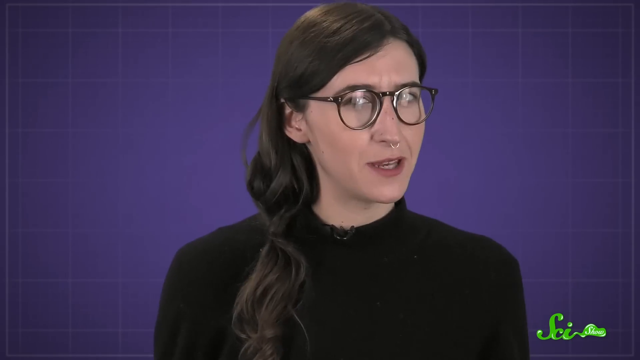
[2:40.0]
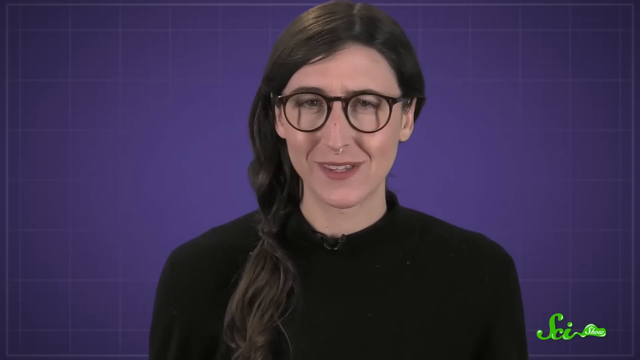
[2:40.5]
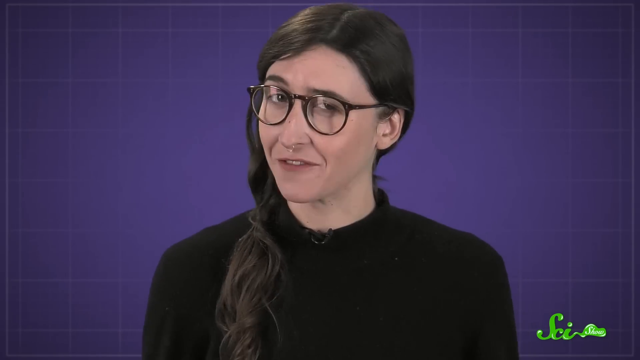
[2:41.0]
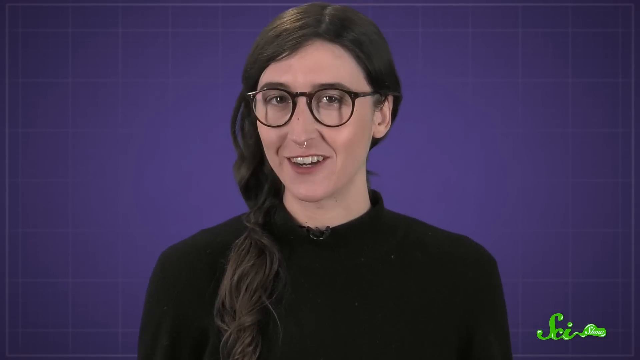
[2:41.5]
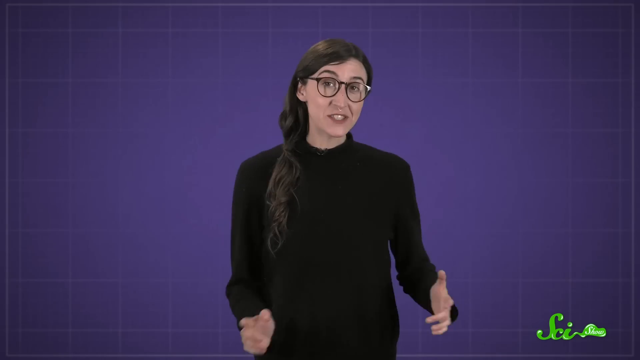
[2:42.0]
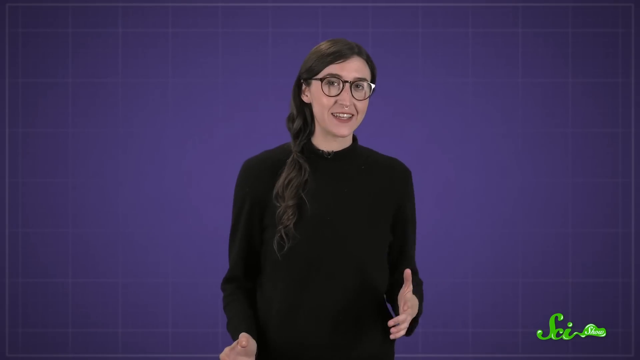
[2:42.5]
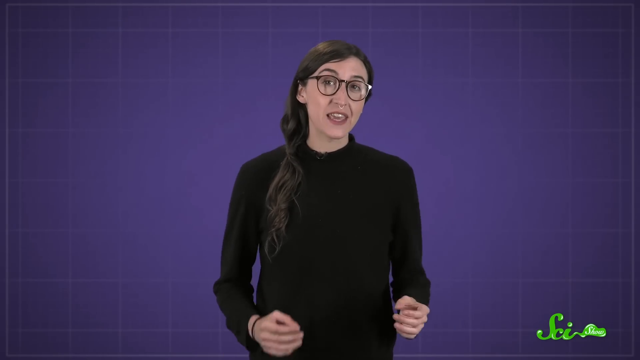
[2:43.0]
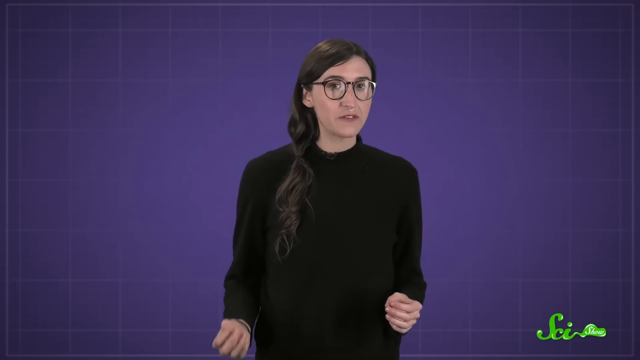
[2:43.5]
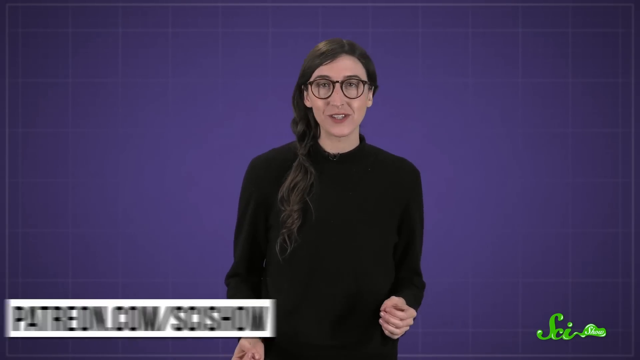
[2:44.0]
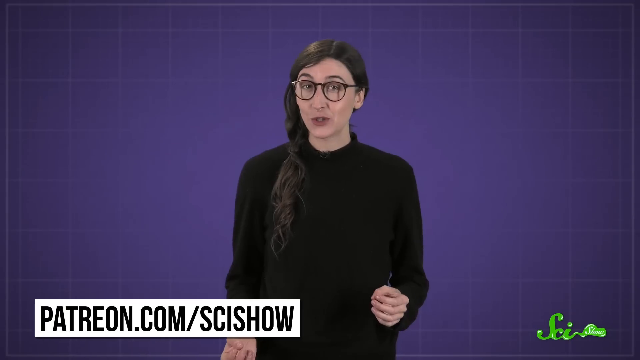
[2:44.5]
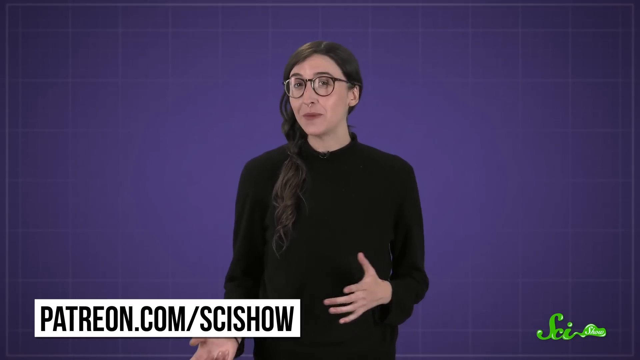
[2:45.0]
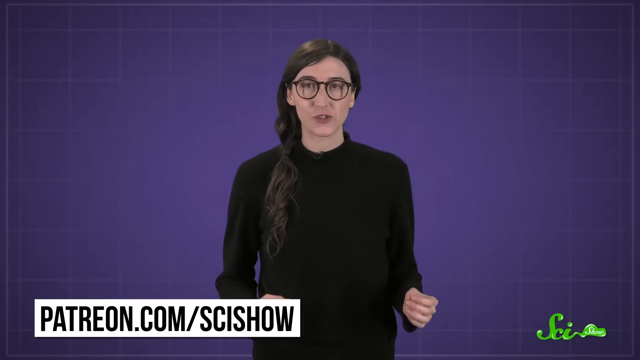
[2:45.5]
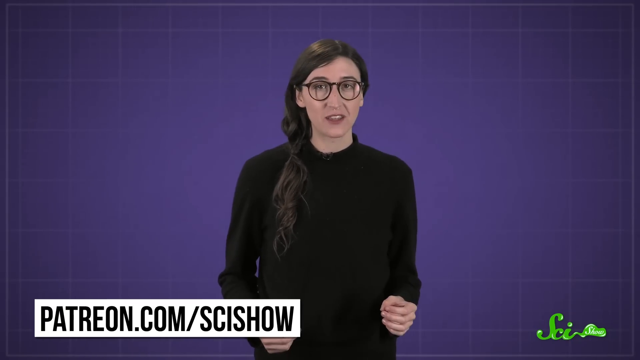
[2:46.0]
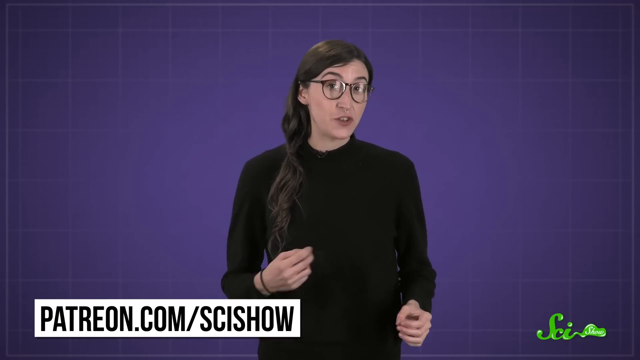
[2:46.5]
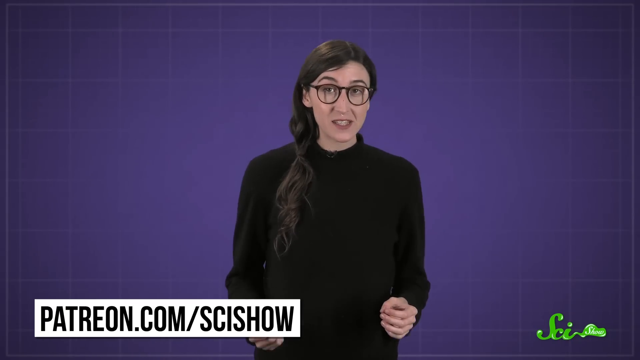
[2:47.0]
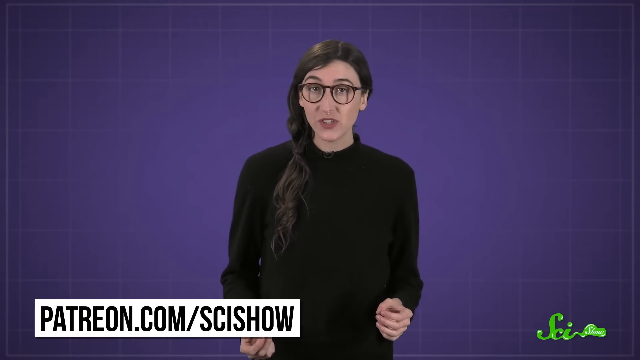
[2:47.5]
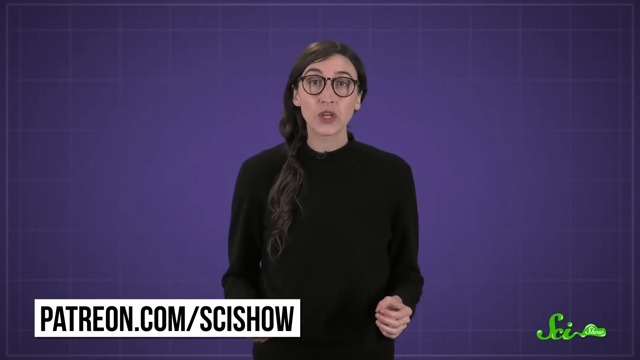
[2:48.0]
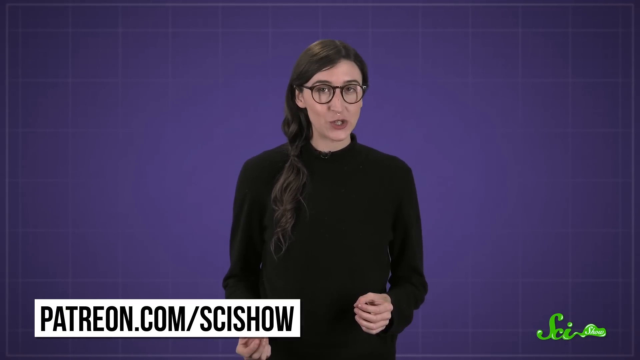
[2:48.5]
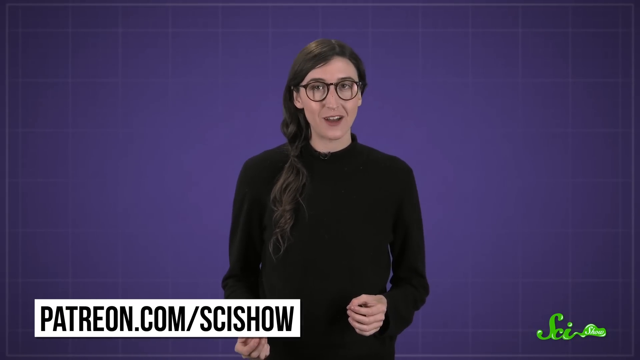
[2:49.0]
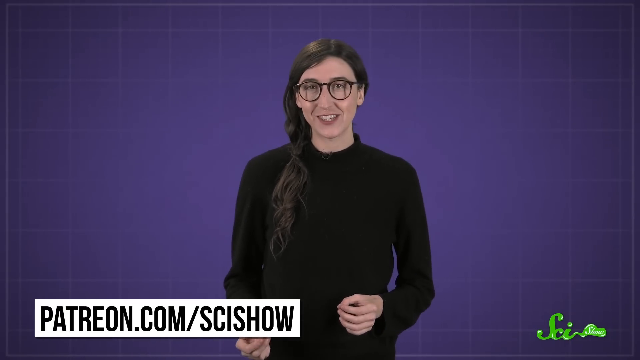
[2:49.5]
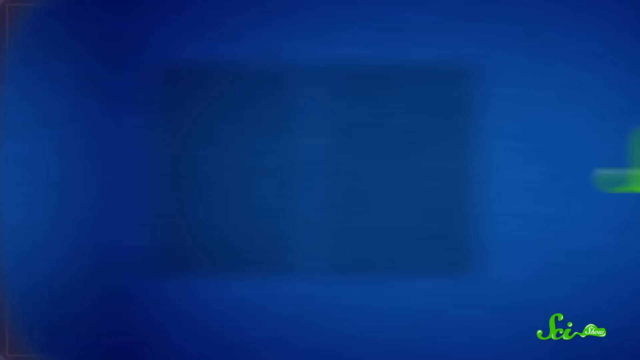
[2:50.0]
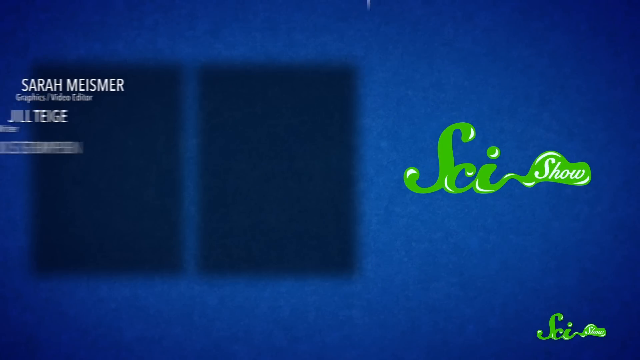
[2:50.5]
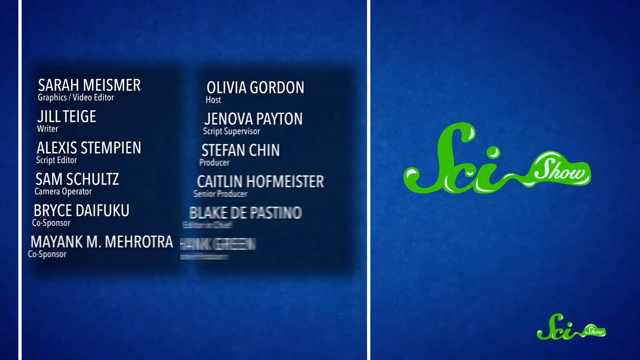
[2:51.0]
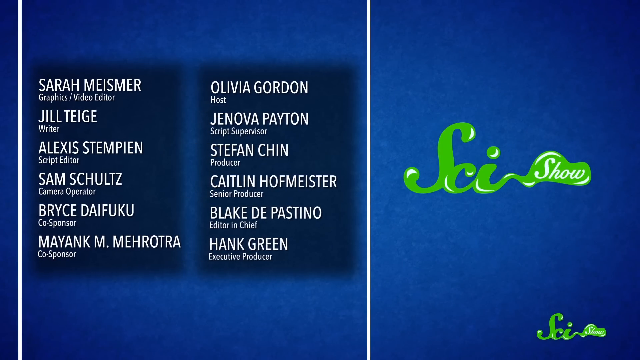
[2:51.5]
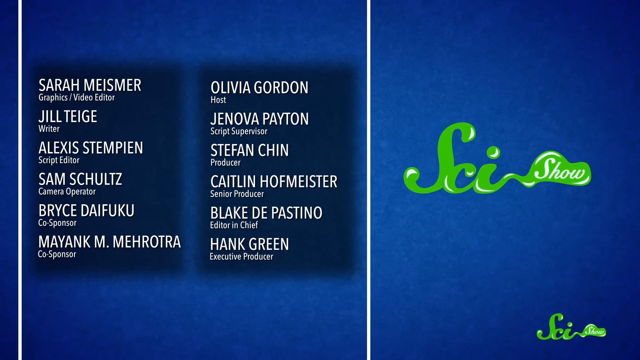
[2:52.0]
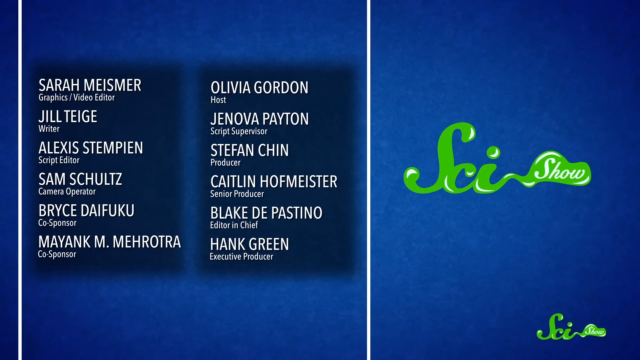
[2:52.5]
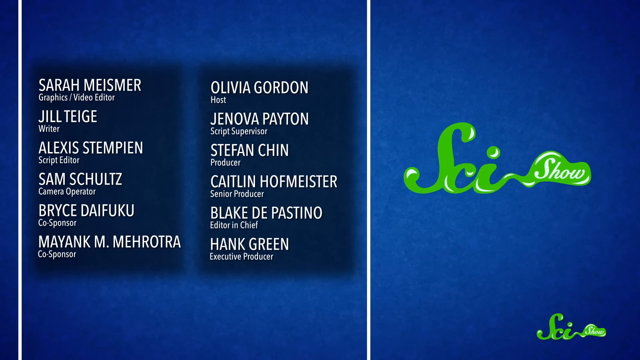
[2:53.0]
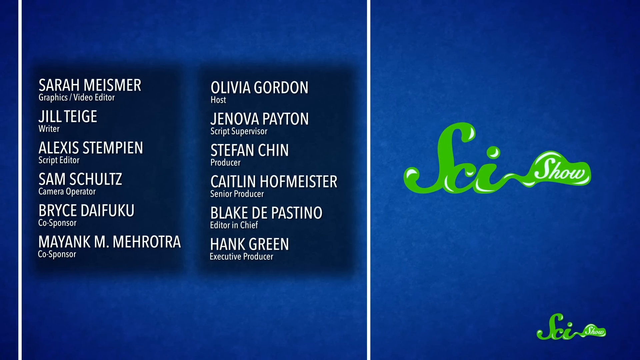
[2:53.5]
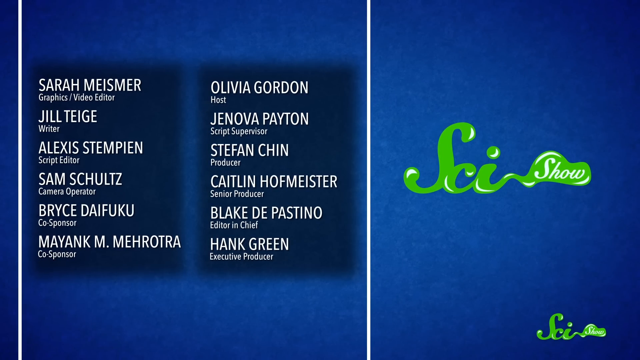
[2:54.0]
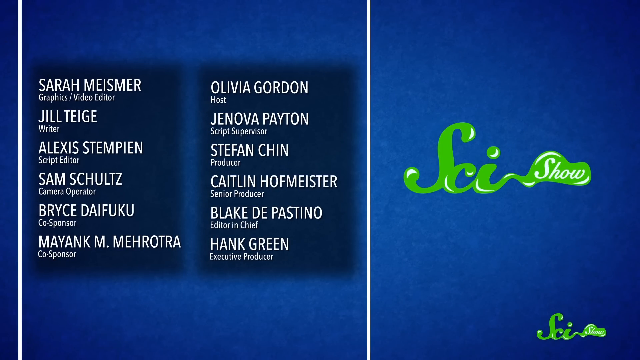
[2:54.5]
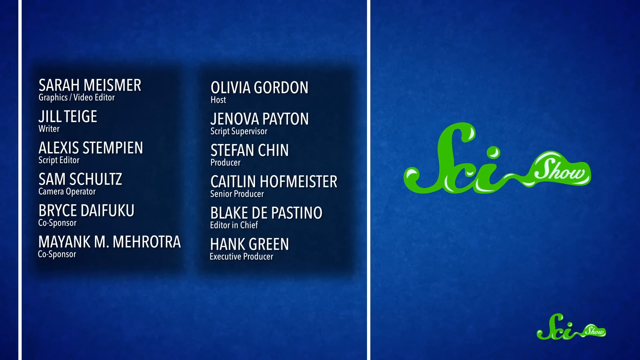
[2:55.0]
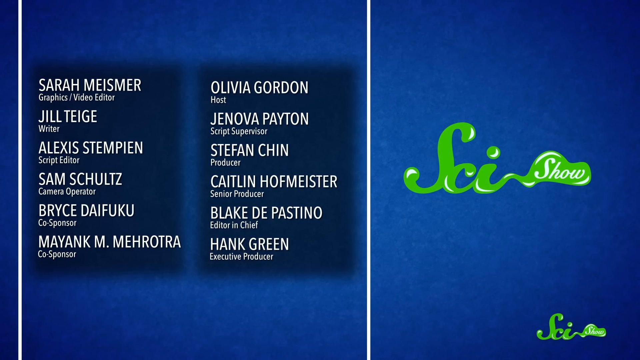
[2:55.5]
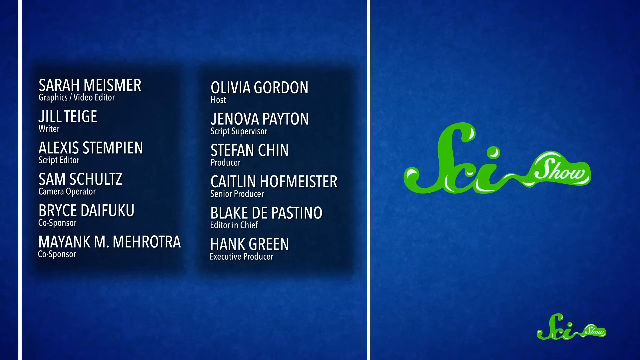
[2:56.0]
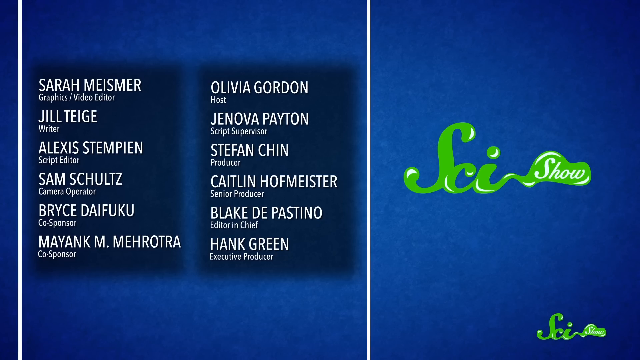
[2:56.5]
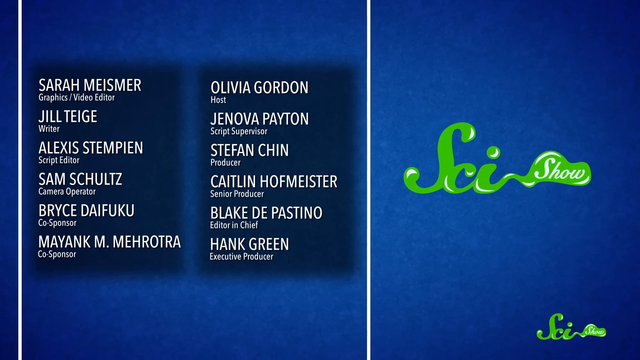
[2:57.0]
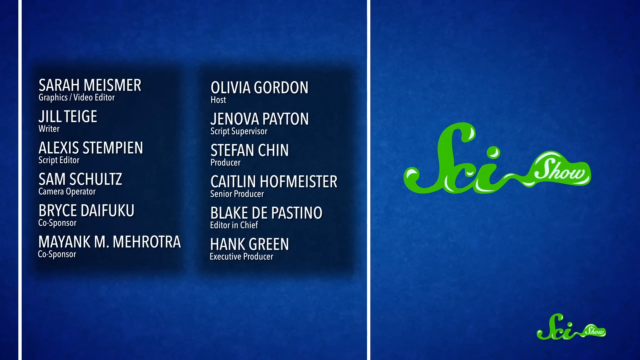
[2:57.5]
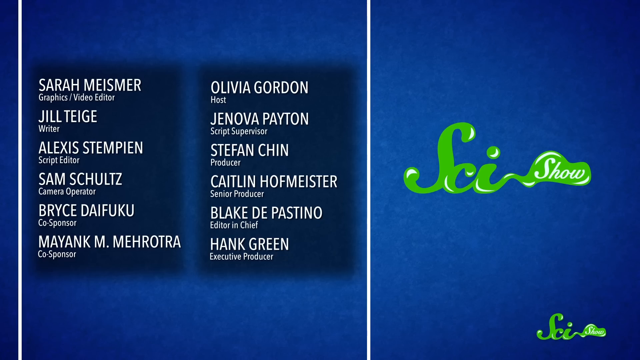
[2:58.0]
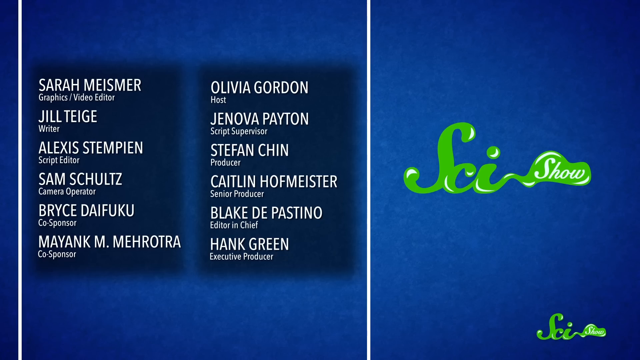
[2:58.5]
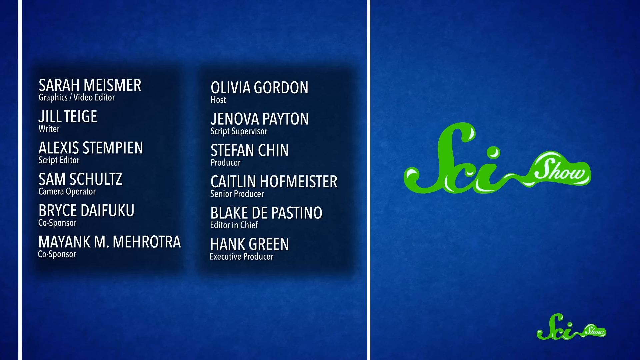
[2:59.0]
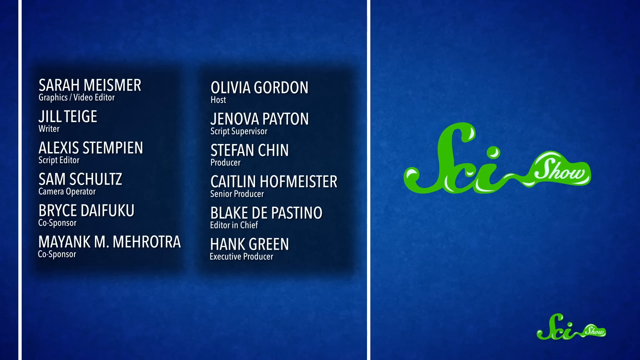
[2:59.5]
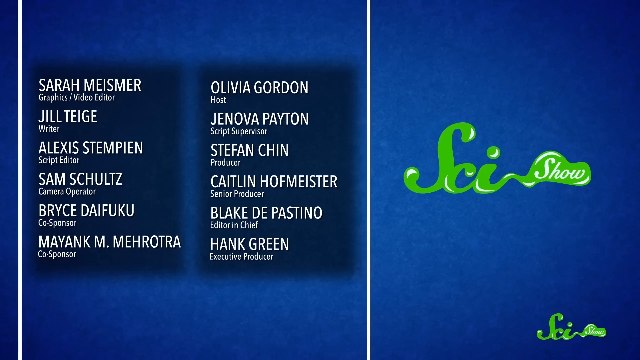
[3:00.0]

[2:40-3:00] The woman is speaking in front of a purple backdrop, wearing a dark sweater and dark brown glasses, with long dark hair. Text then reads "patreon.com" with "SciShow." Credits appear on the left, listing the host's name, Olivia Gordon, along with the writers, script supervisor, editor, producer, camera operator, senior producer, co-sponsors and editor-in-chief. On the right is "SciShow" with a message inviting viewers to check out other shows or watch Olivia on other shows.